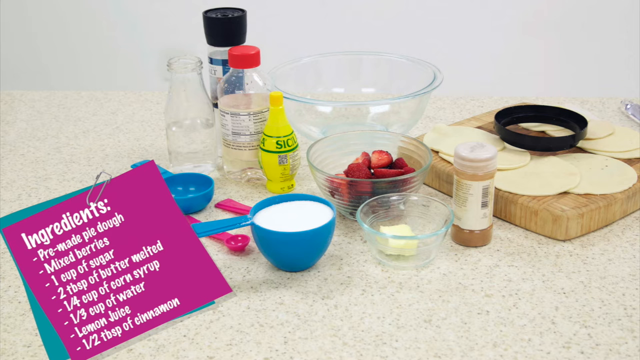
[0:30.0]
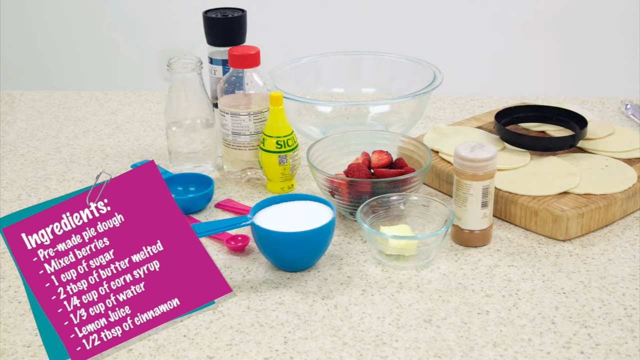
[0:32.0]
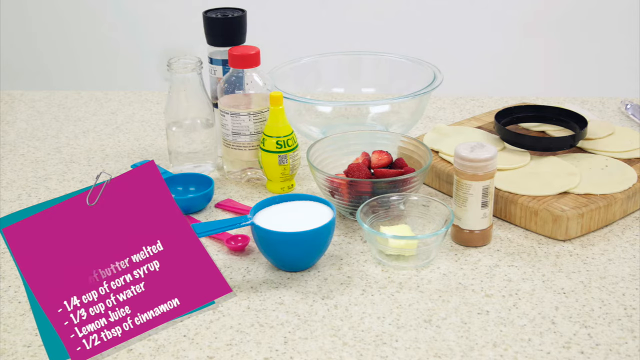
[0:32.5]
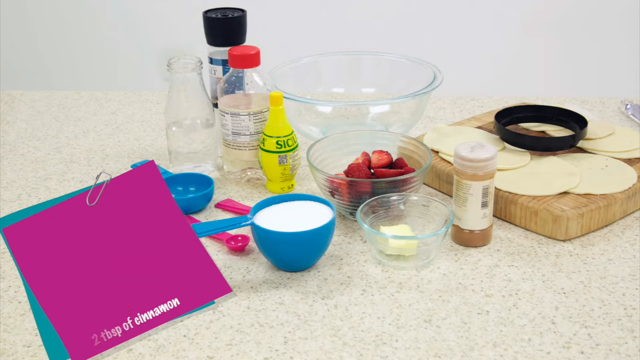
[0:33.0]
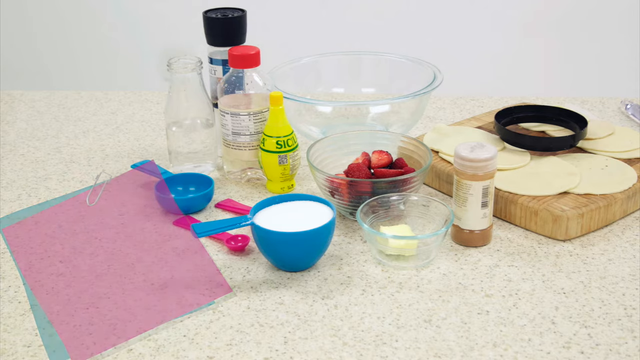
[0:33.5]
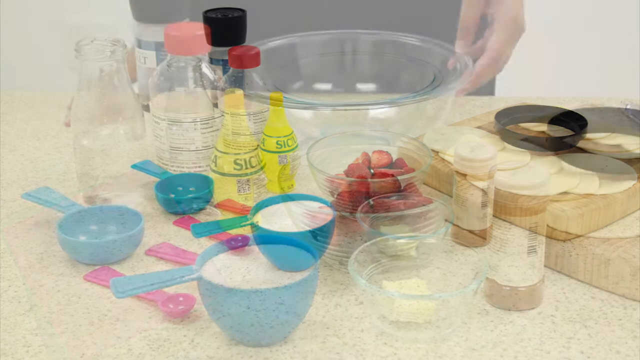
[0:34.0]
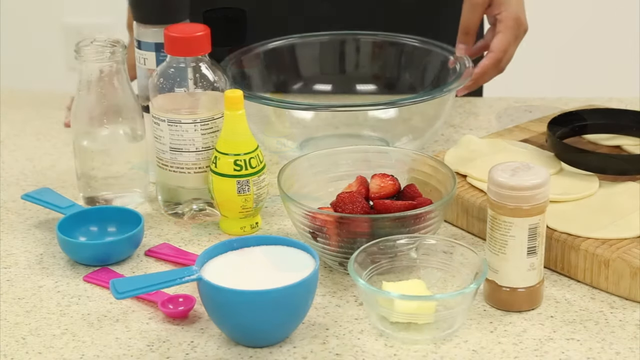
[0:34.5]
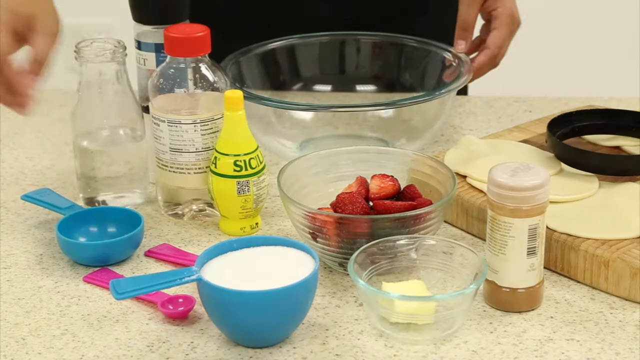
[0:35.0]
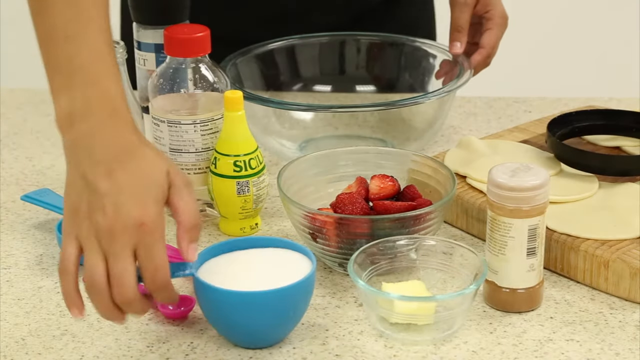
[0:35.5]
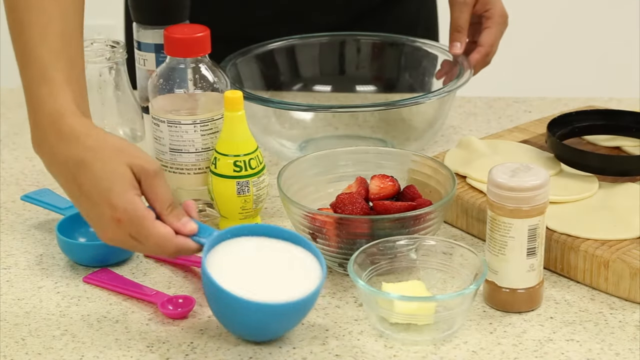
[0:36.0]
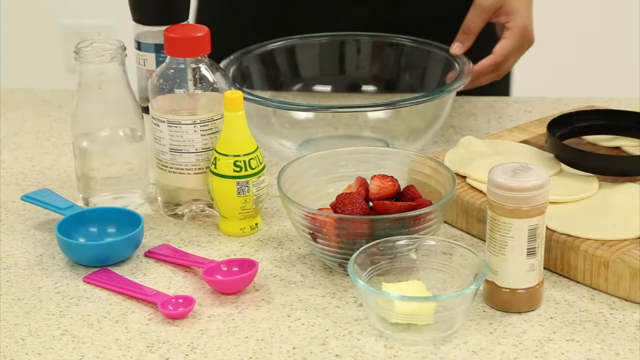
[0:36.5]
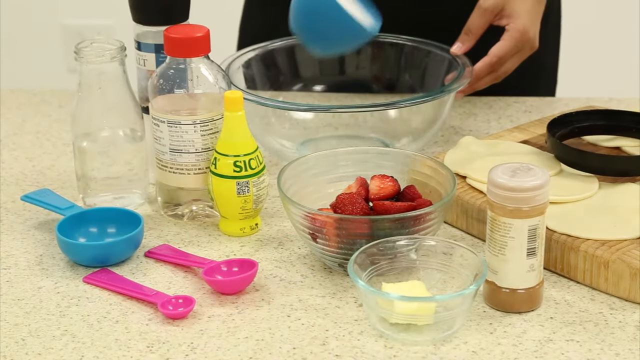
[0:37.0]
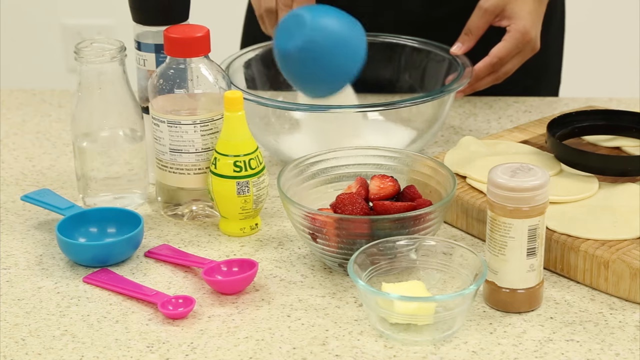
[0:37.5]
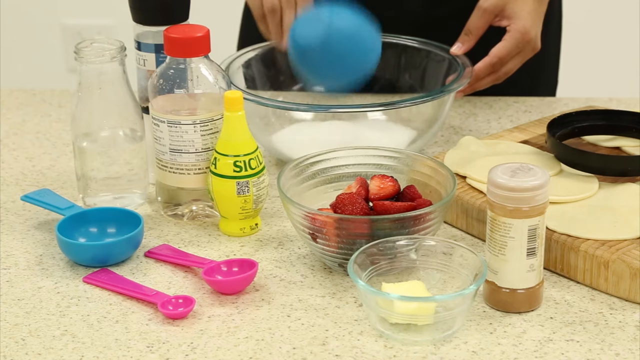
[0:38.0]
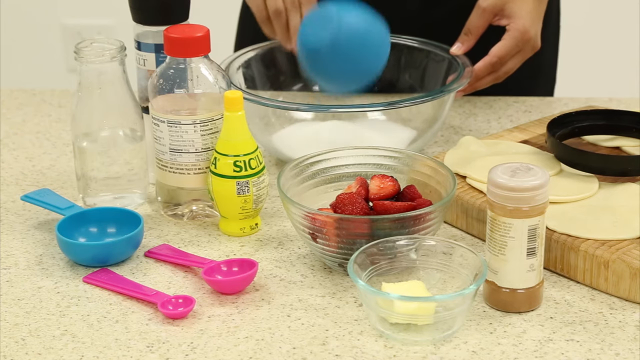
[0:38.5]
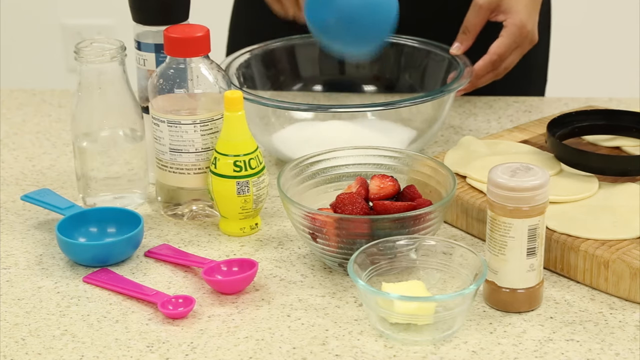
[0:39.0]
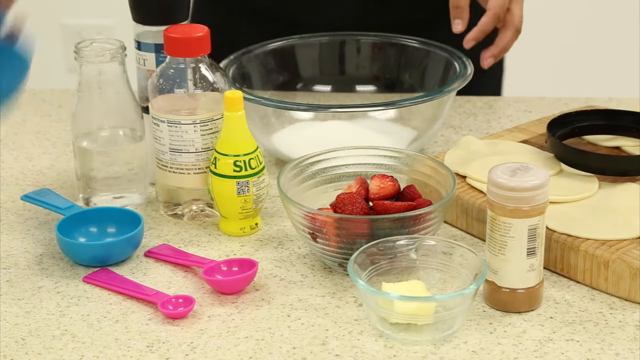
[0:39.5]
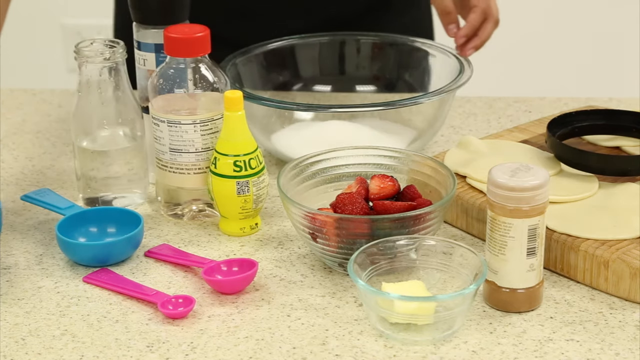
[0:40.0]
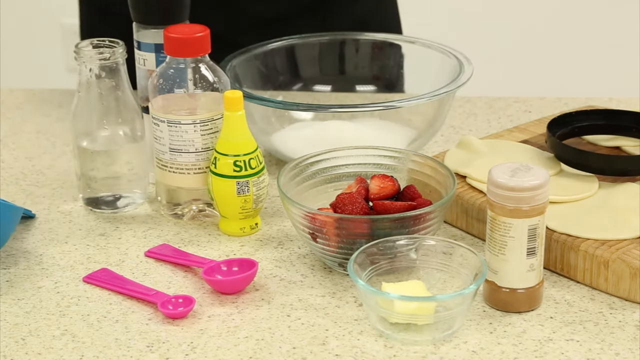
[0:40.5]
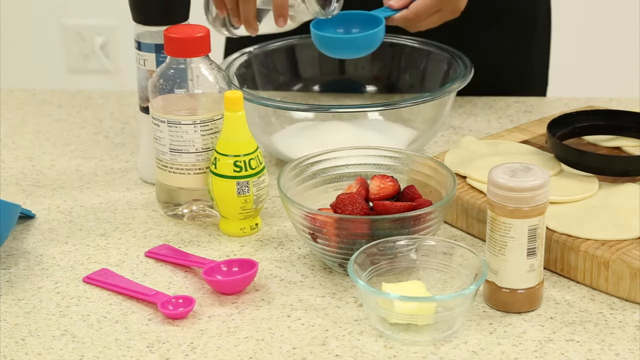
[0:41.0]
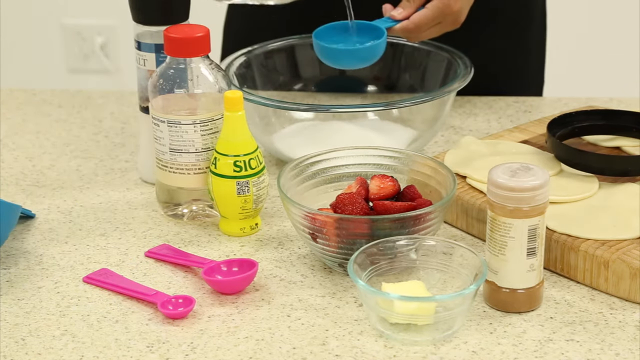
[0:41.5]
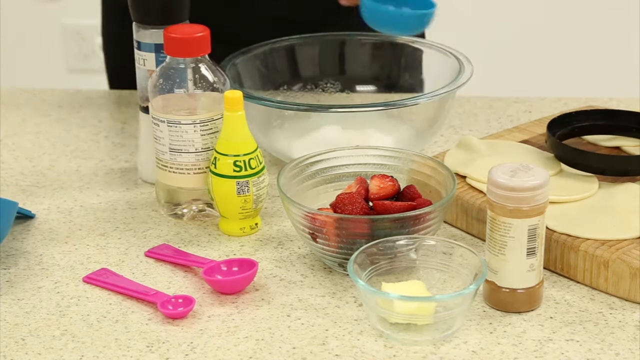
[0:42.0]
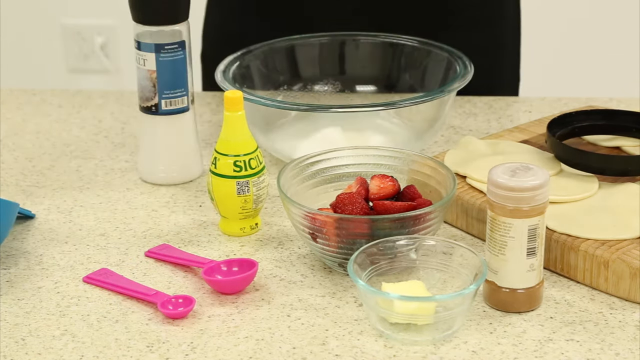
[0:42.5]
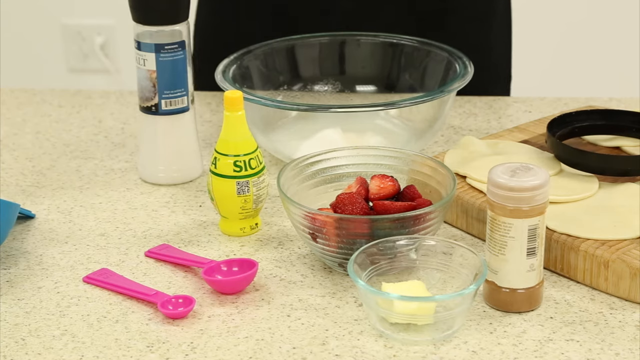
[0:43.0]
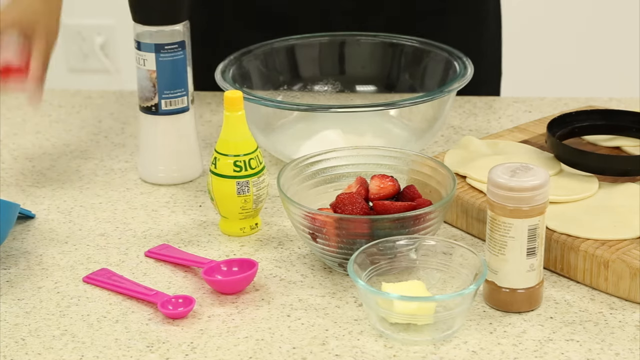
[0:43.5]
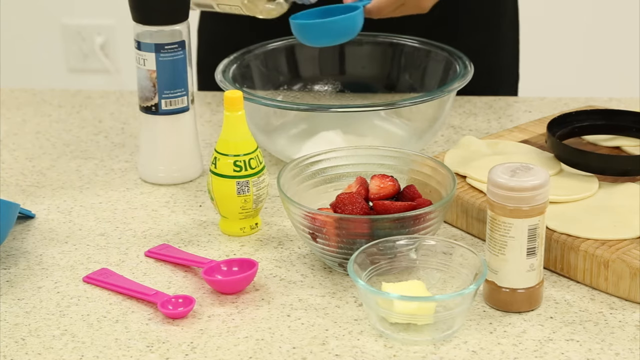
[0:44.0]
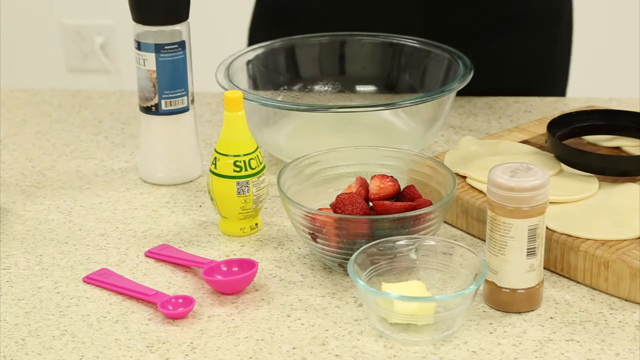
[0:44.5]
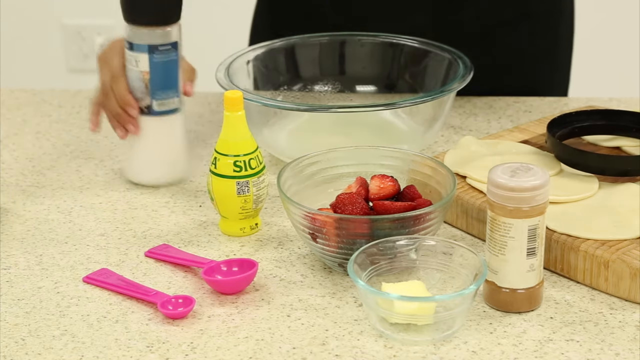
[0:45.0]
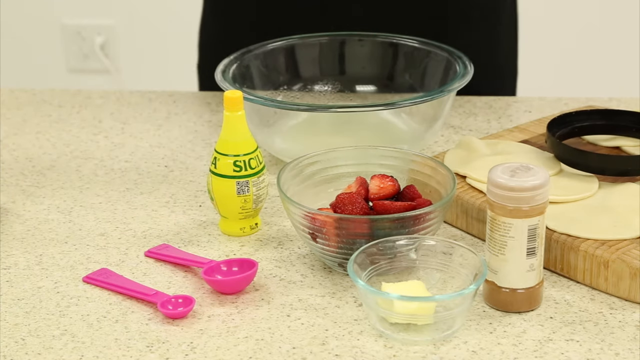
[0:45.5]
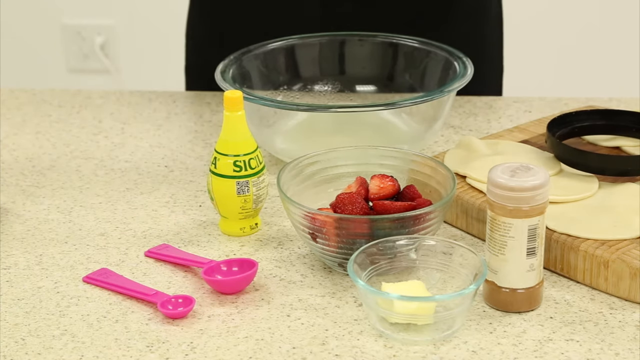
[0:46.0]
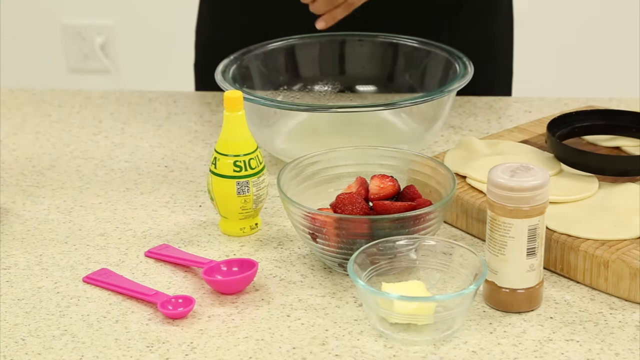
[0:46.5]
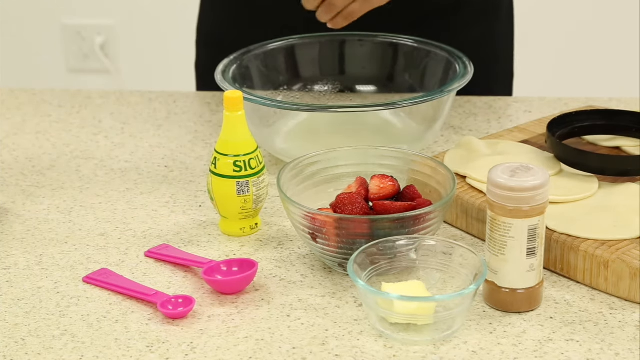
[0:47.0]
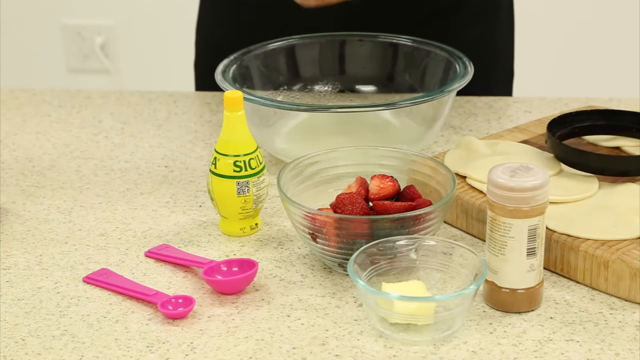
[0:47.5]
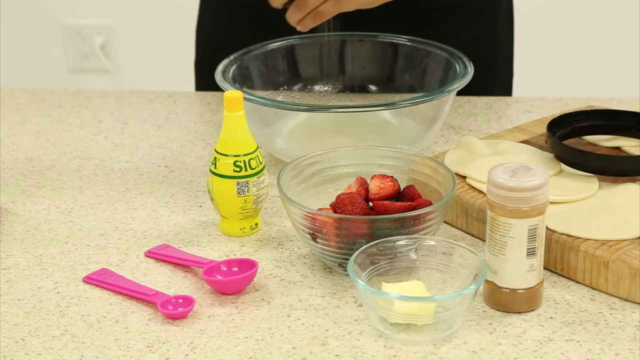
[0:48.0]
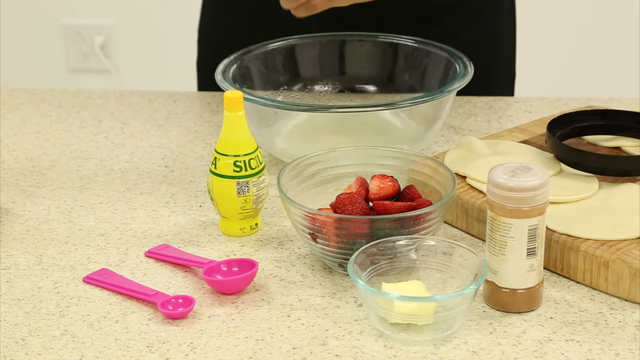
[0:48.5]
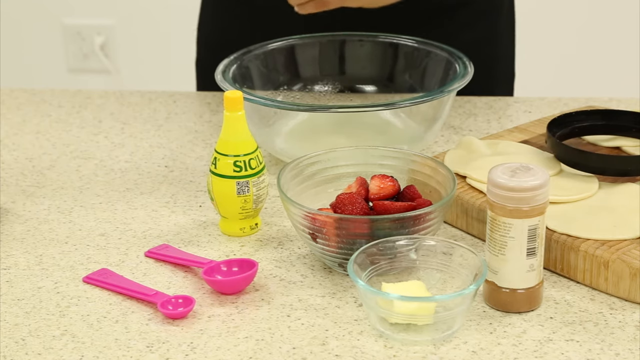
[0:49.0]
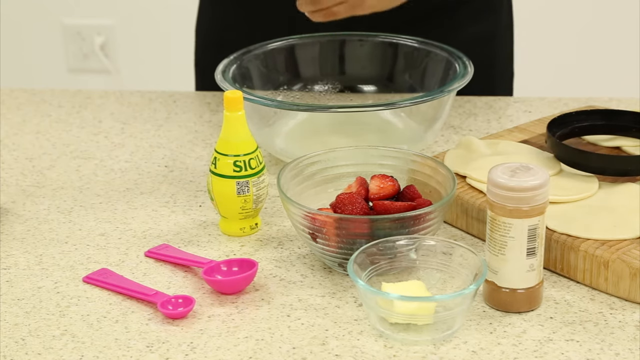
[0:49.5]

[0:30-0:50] After the ingredients are displayed, the man making the dessert preps everything. He starts by pouring sugar into a bowl, then measures out the other ingredients. No measurements are displayed on the screen, and there are no subtitles naming the ingredient he is using at each moment. The table he works on is clean, not messy, and everything on it is well organised.